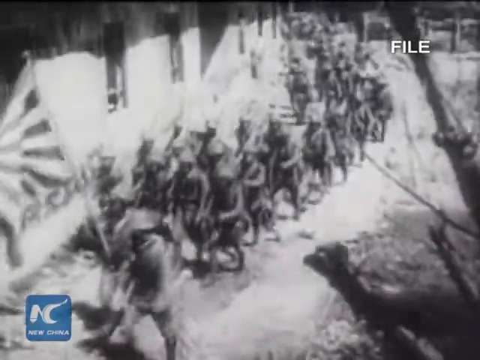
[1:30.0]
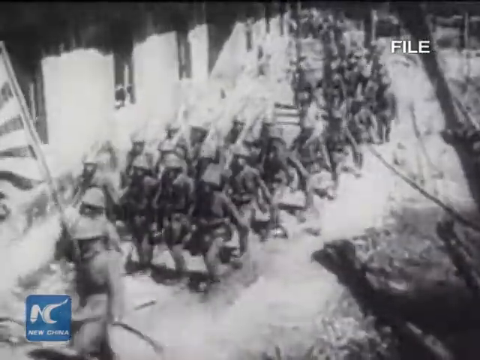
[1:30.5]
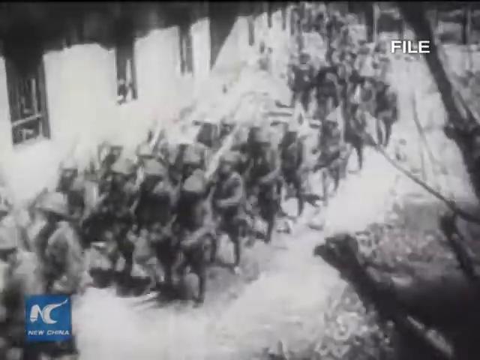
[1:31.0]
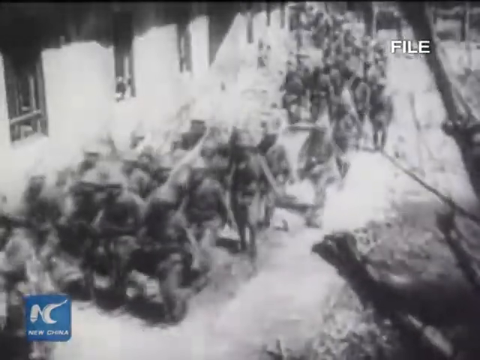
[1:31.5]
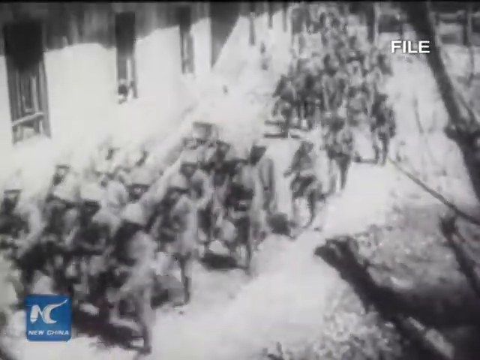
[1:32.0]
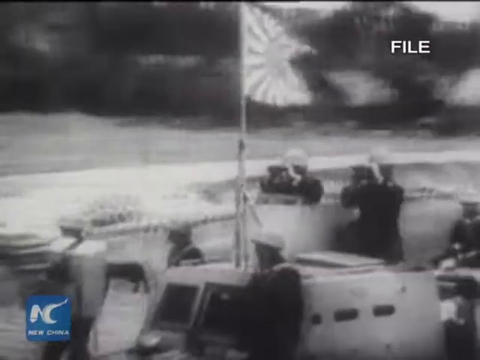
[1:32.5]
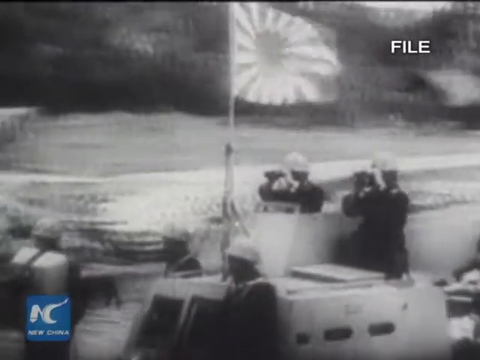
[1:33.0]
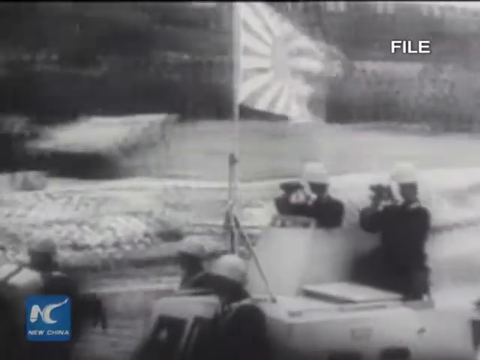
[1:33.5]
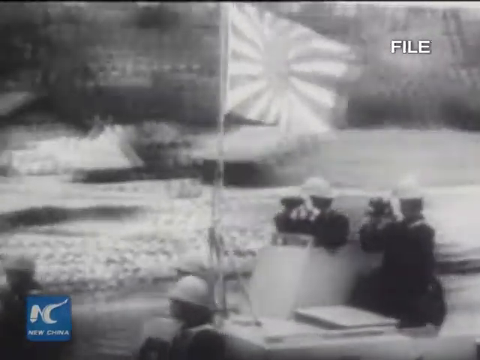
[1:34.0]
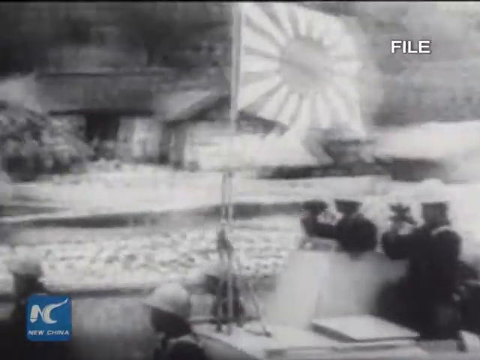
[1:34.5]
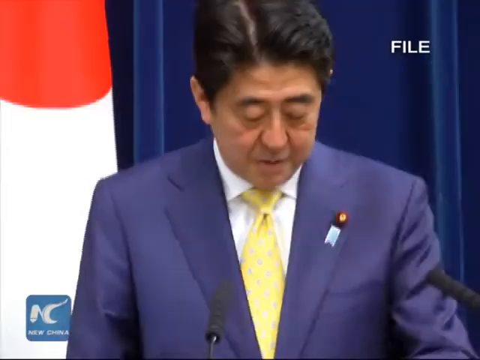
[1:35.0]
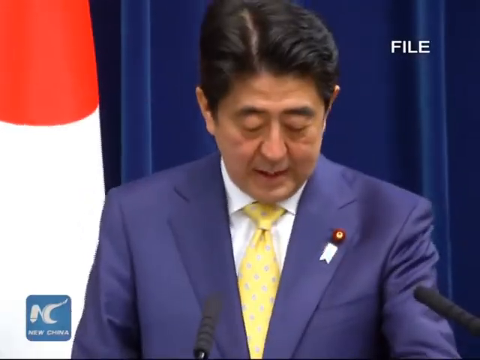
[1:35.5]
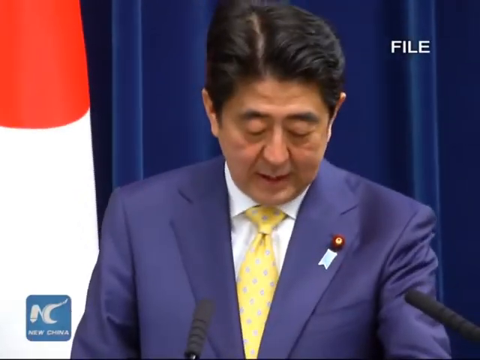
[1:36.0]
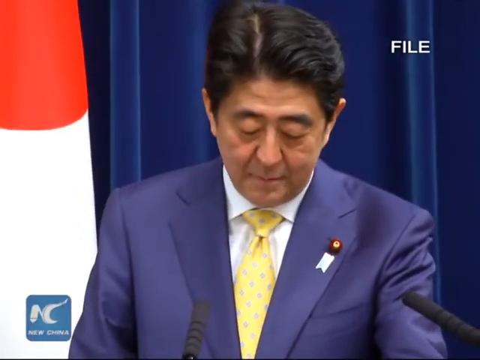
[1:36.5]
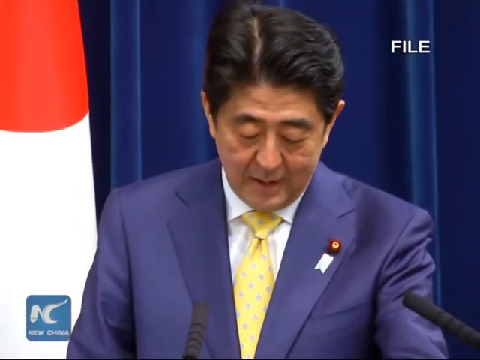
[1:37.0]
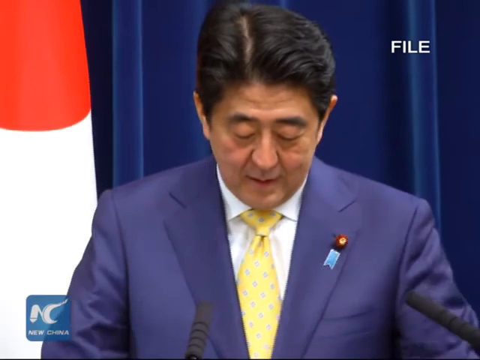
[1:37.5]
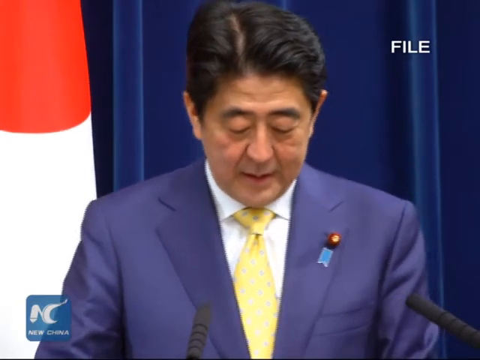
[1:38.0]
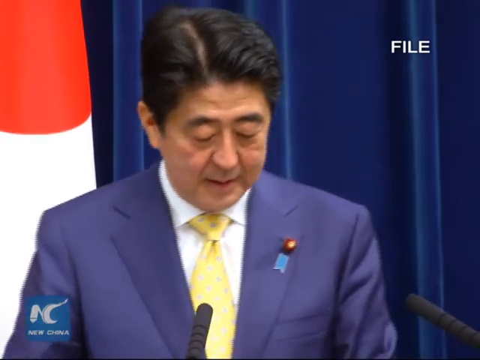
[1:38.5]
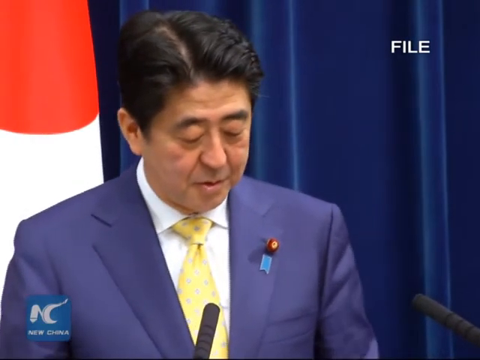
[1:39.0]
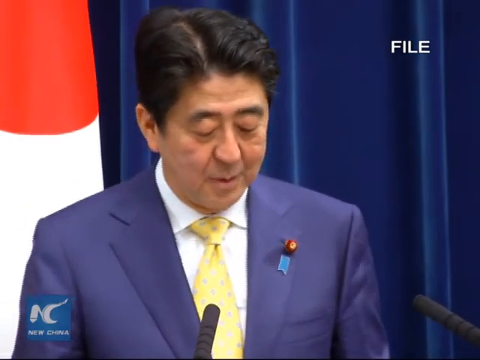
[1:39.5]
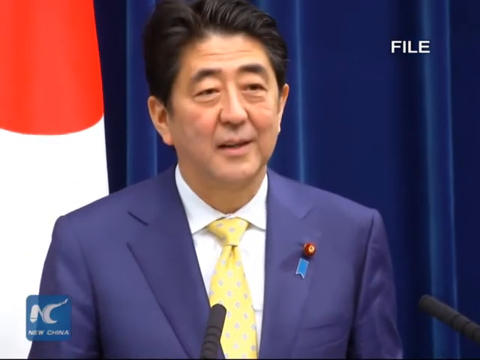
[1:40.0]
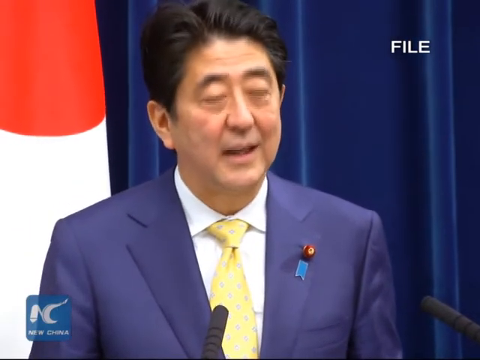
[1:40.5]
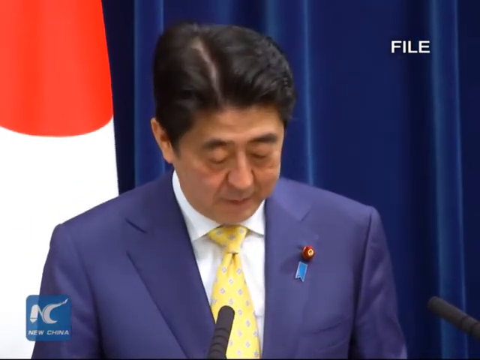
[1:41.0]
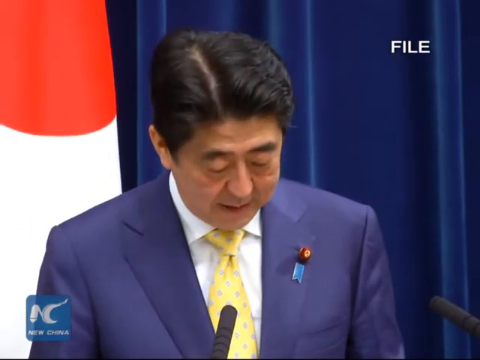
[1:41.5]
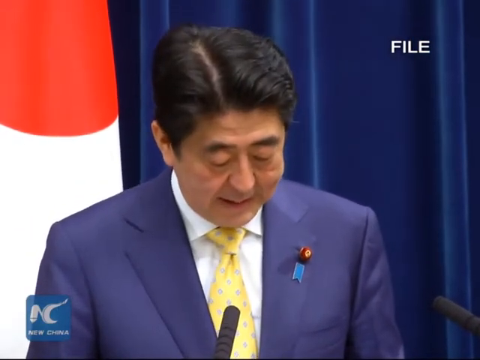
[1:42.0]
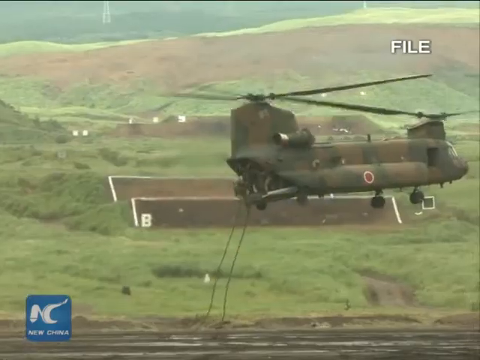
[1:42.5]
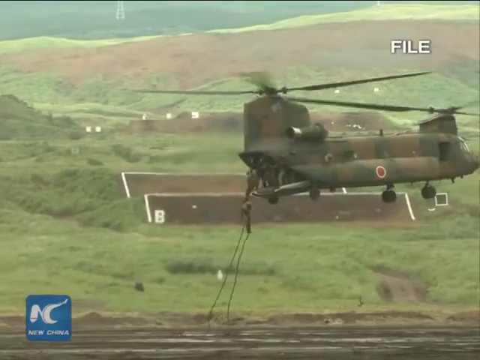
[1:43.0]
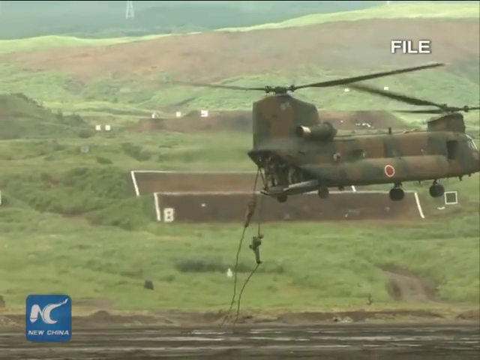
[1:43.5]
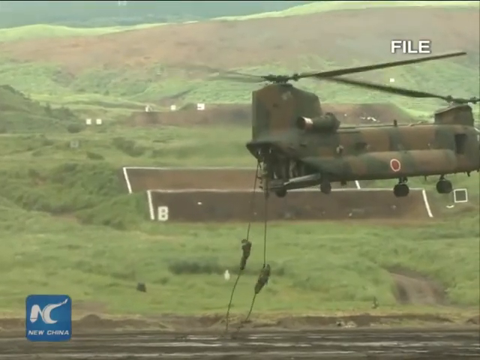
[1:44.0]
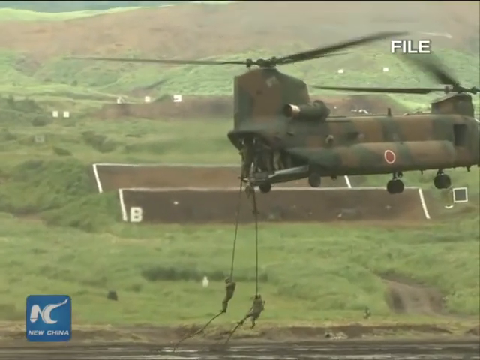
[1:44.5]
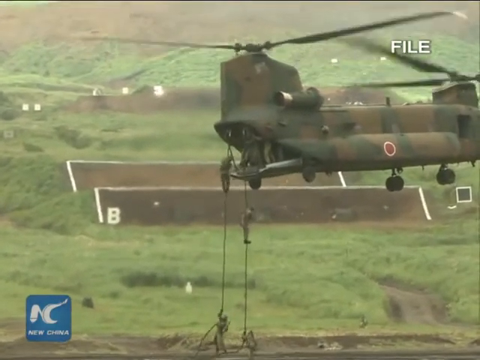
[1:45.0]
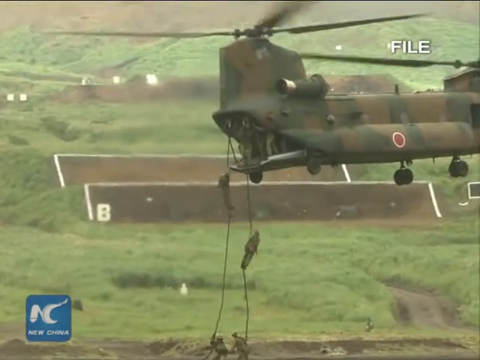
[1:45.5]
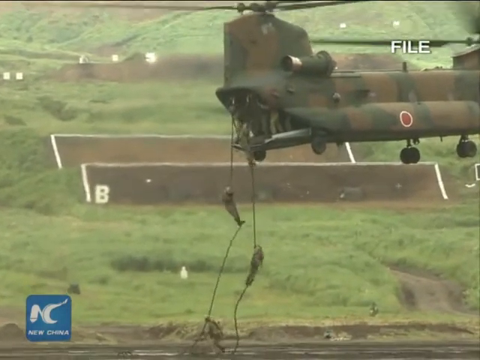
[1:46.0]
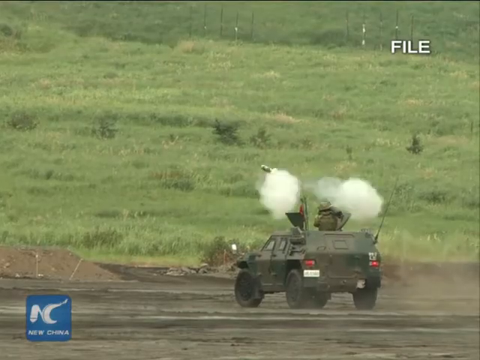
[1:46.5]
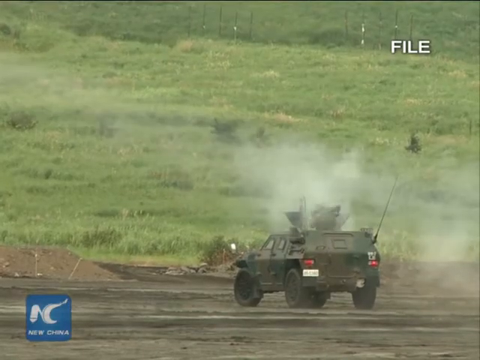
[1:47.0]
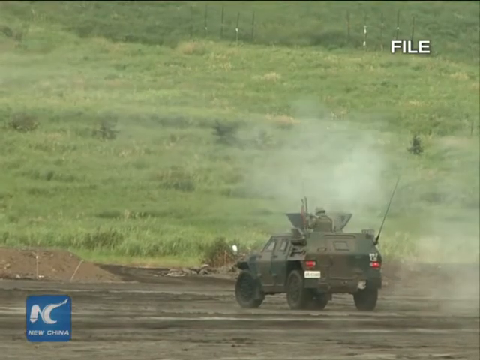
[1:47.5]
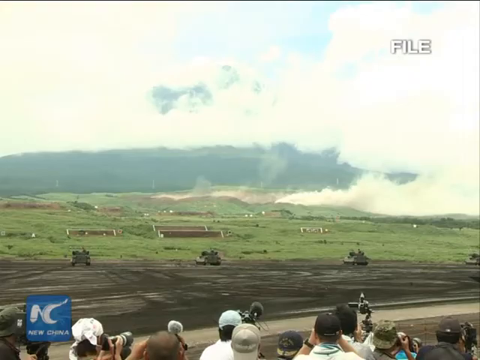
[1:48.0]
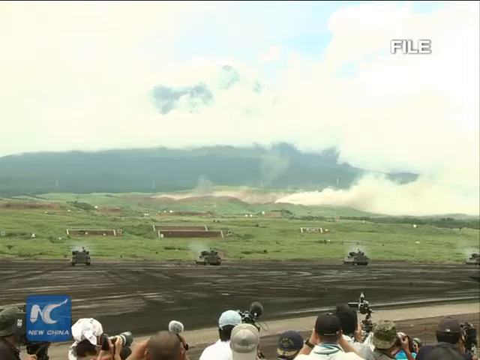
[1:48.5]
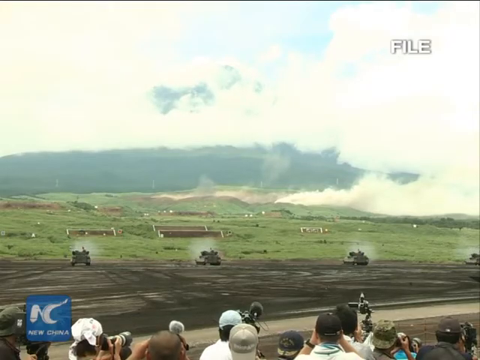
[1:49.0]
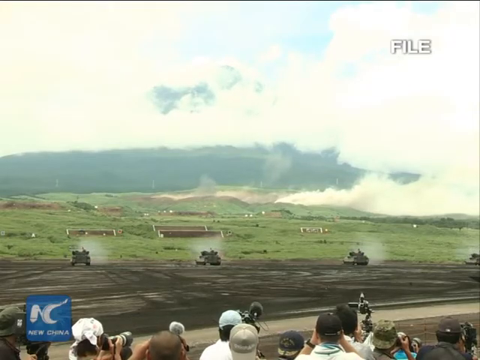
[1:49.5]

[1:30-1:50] Old World War II footage shows hundreds of Japanese soldiers marching, not in single file but loosely; one of them carries the Japanese flag as a battle standard. Next, a man, apparently the head of the Japanese Navy or possibly some other figure, speaks or gives a speech. A carrier helicopter appears, and soldiers slide or rappel down ropes to the ground. Then men fire missiles from bazookas in a grassy field; this appears to be some sort of training, possibly for counter-terrorism.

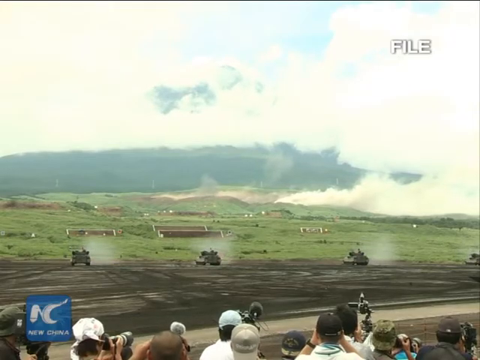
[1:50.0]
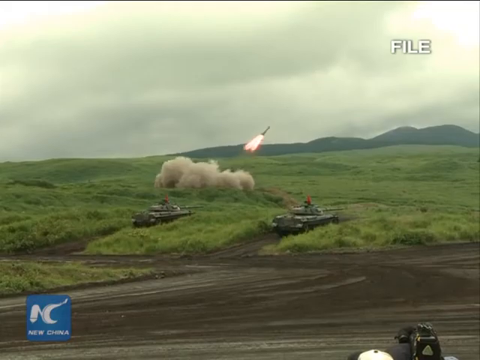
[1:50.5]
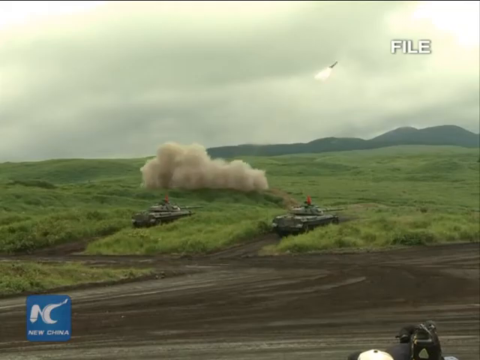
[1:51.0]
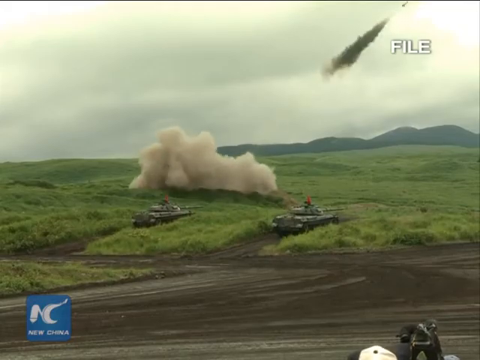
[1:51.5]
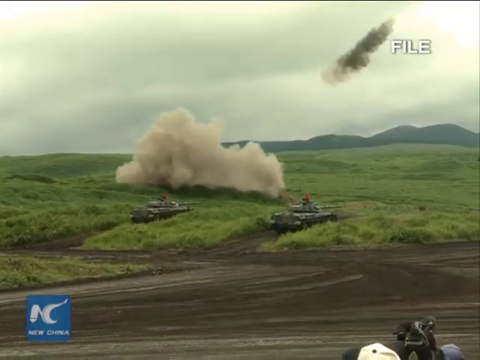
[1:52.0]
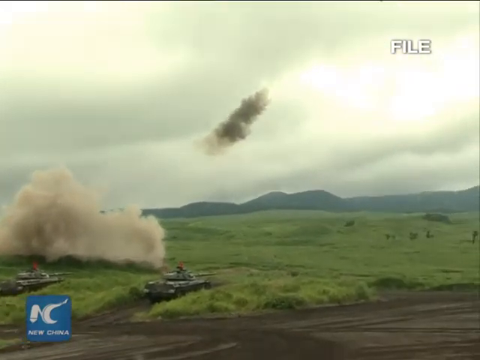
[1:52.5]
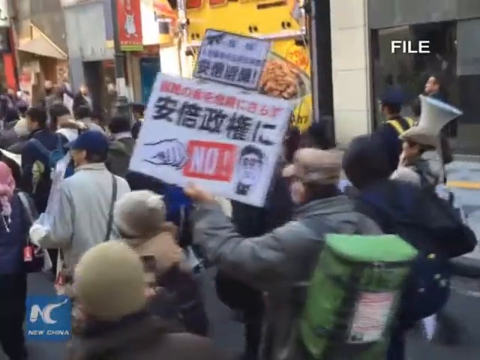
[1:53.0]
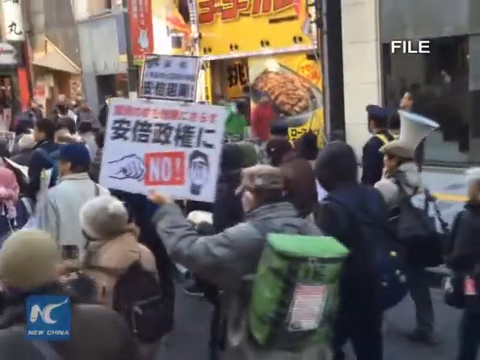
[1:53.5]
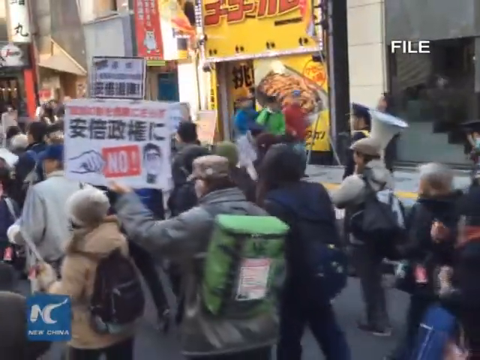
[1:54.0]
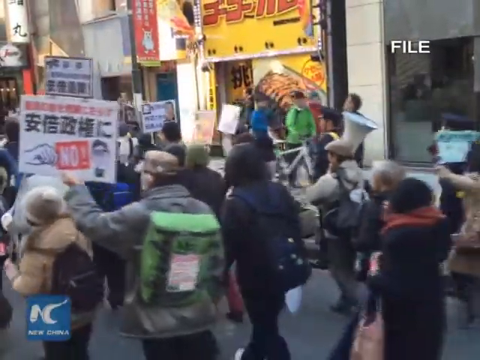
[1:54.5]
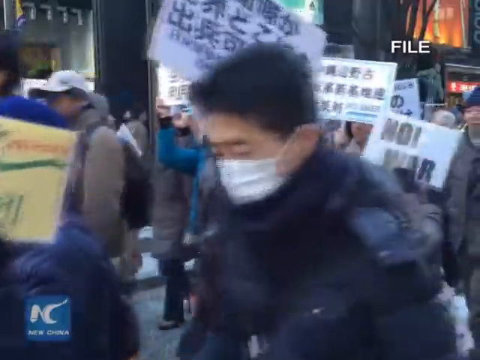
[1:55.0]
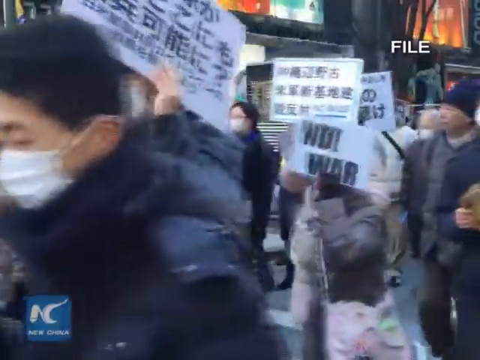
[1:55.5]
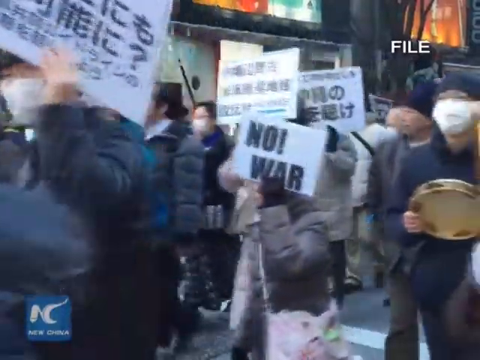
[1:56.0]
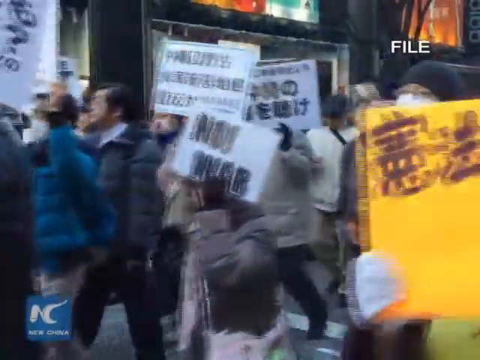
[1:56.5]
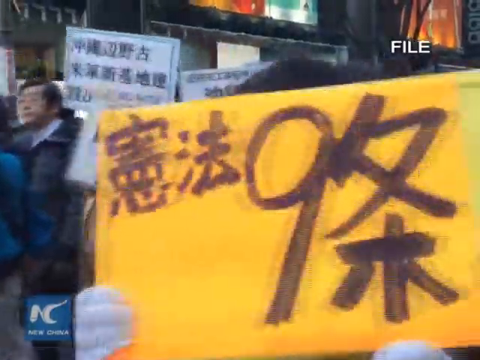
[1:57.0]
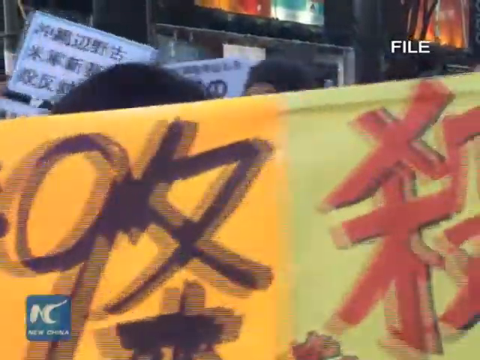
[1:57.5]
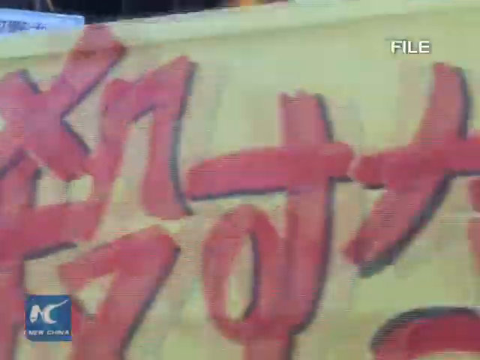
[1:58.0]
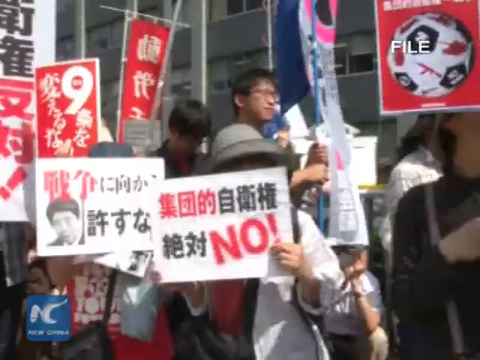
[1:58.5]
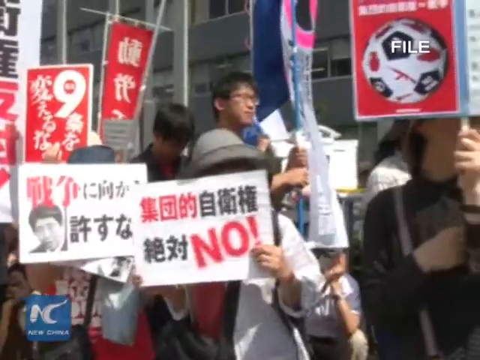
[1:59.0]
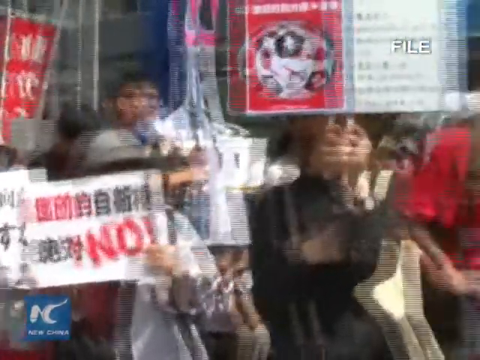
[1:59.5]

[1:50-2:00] A number of military vehicles appear, with men in the back holding rocket launchers and firing missiles in succession. Then what looks like a protest is shown, with what looks like hundreds of people moving around. Most of their signs say "no" with a large exclamation point.